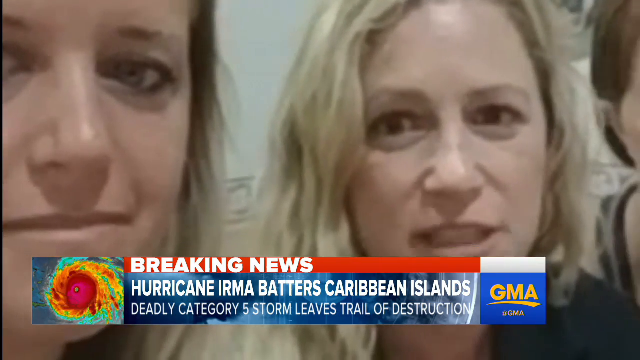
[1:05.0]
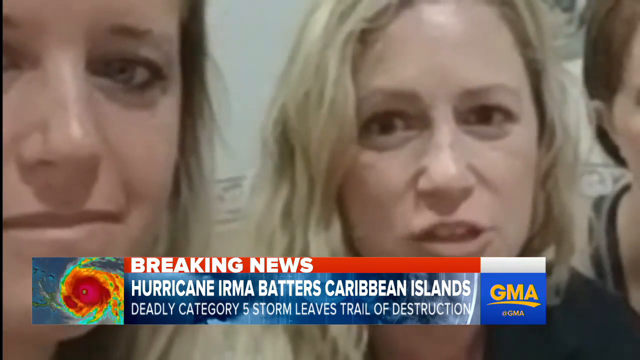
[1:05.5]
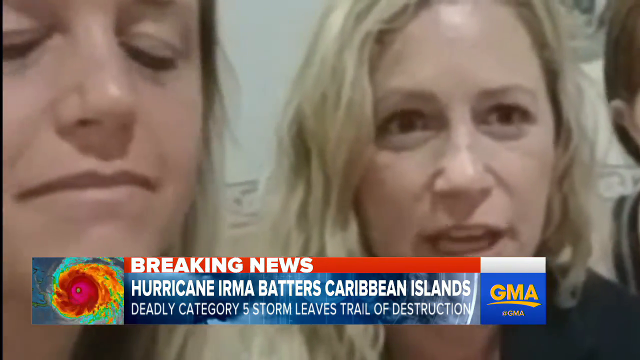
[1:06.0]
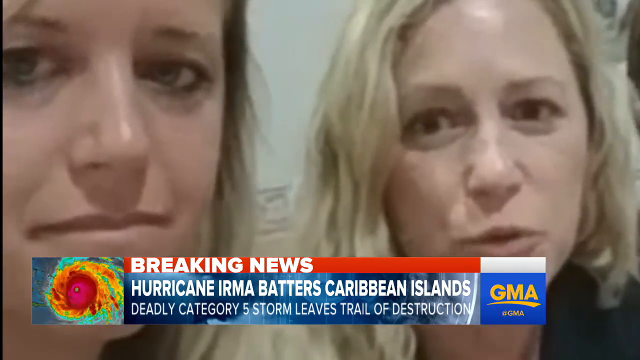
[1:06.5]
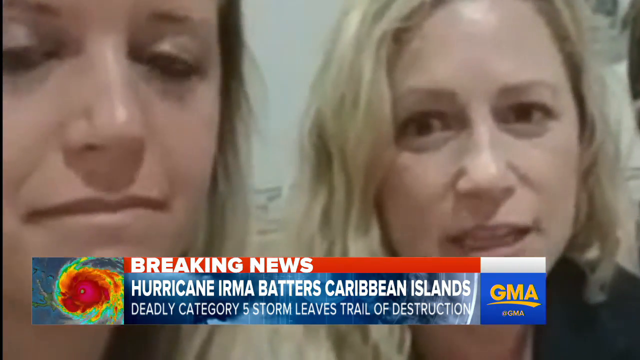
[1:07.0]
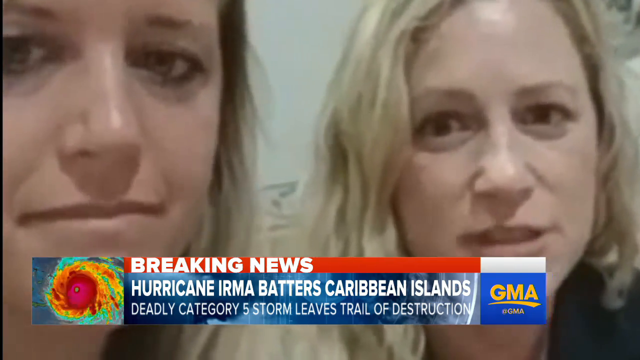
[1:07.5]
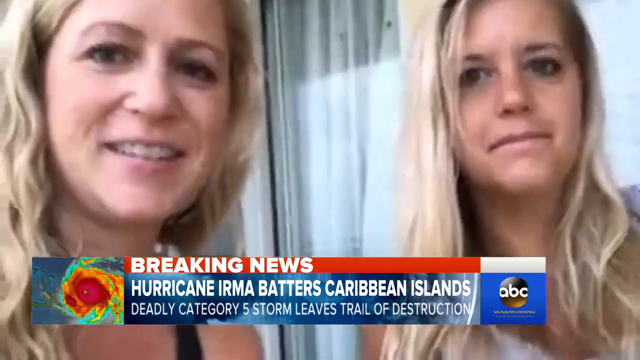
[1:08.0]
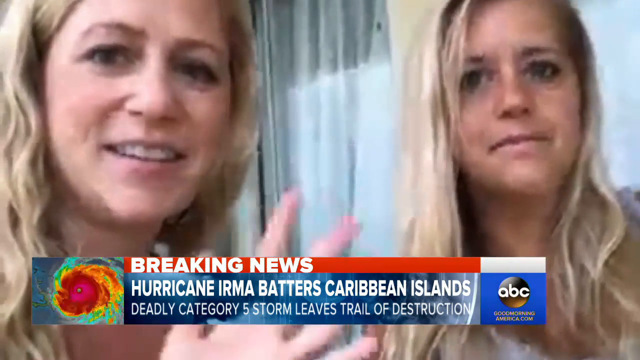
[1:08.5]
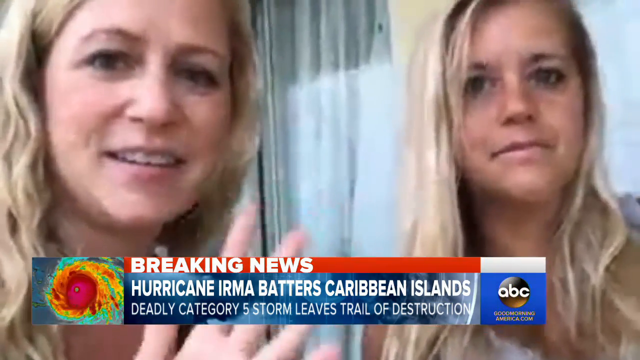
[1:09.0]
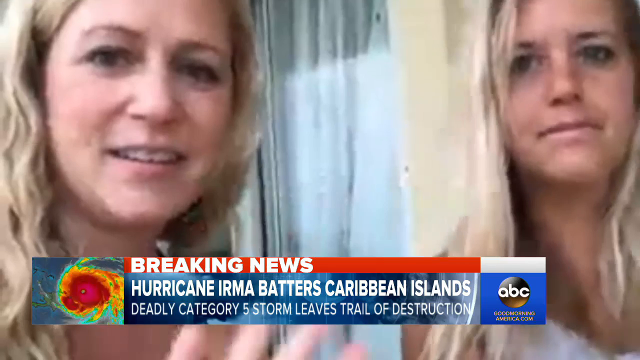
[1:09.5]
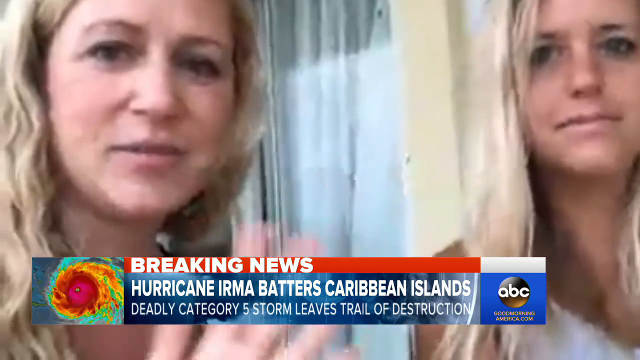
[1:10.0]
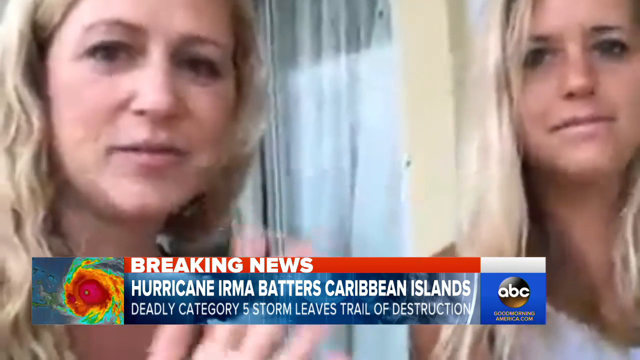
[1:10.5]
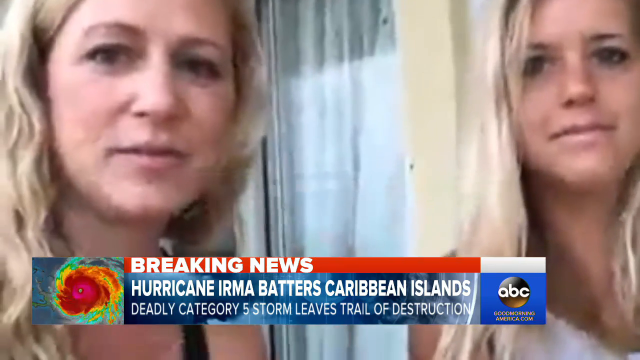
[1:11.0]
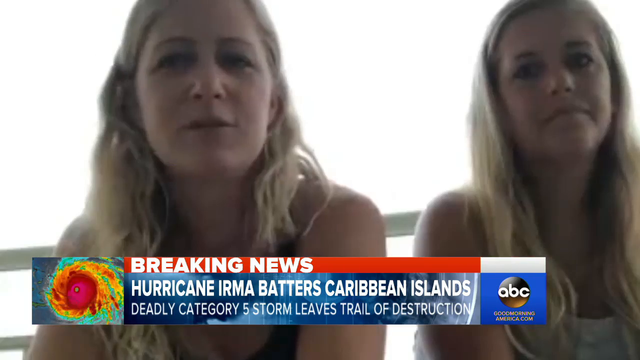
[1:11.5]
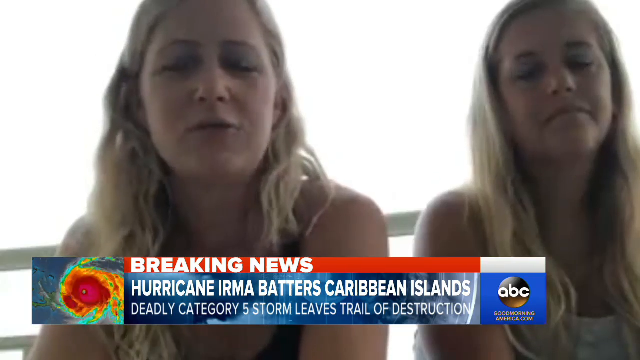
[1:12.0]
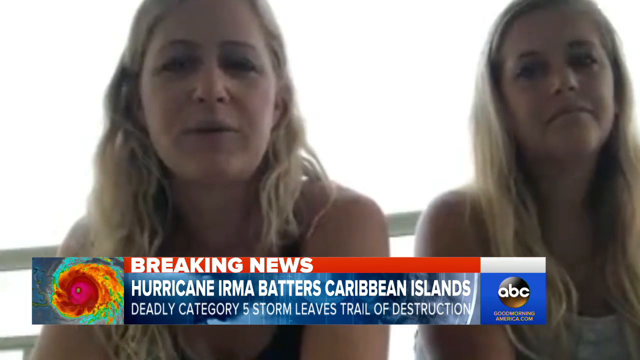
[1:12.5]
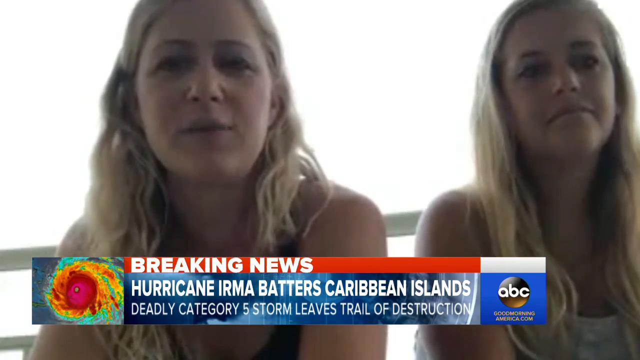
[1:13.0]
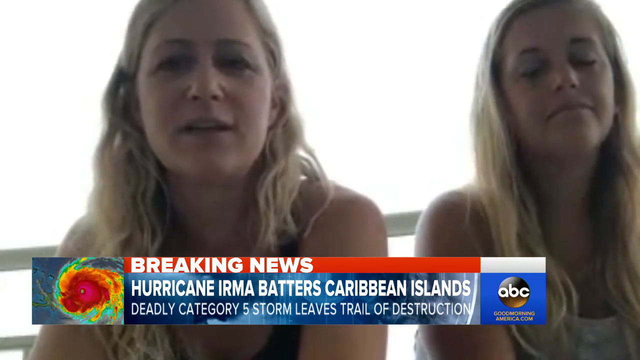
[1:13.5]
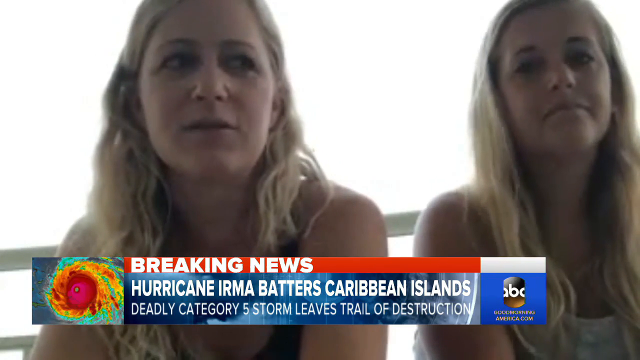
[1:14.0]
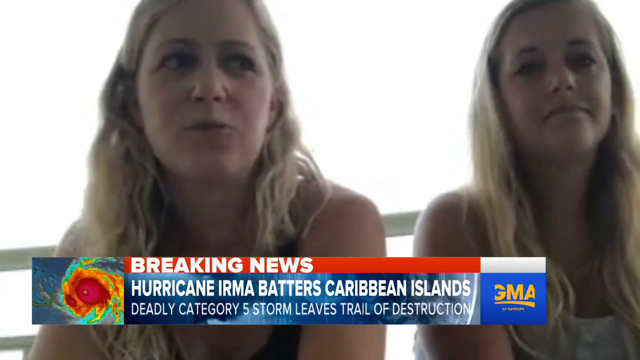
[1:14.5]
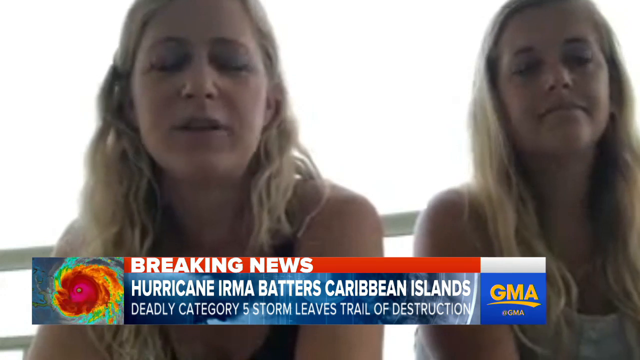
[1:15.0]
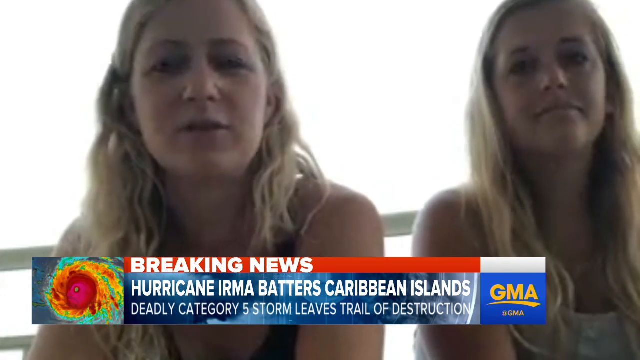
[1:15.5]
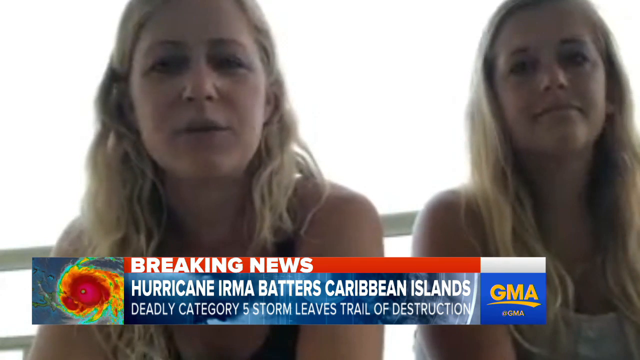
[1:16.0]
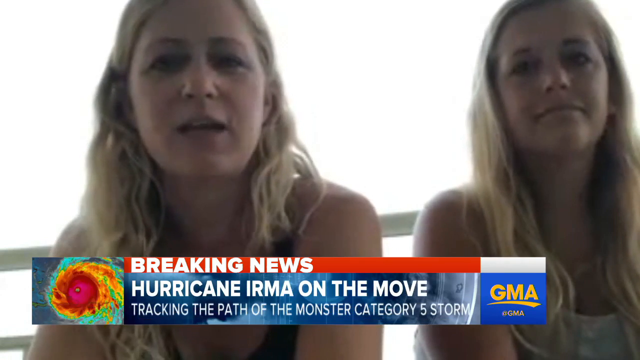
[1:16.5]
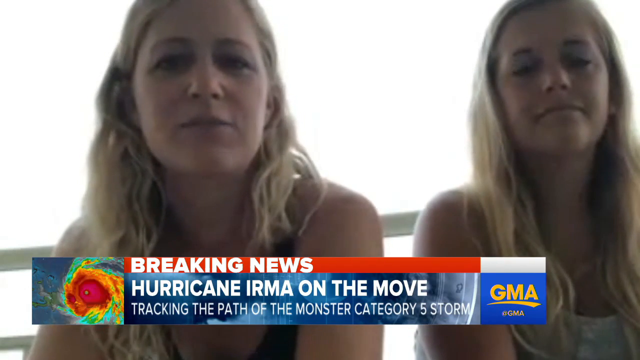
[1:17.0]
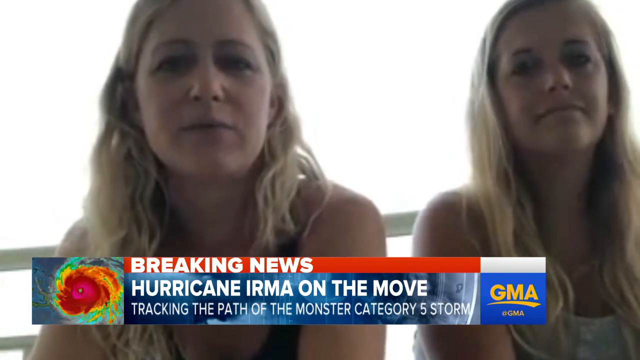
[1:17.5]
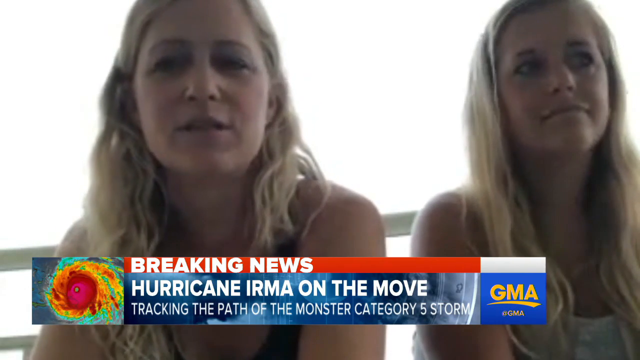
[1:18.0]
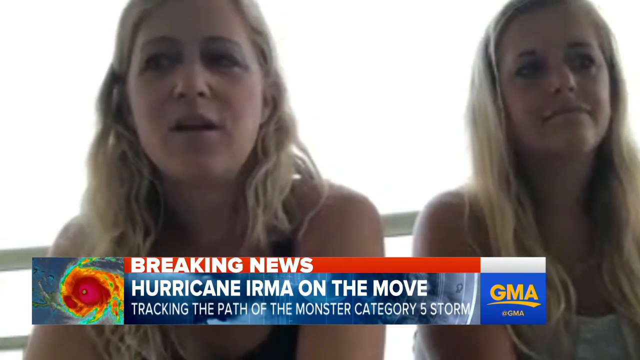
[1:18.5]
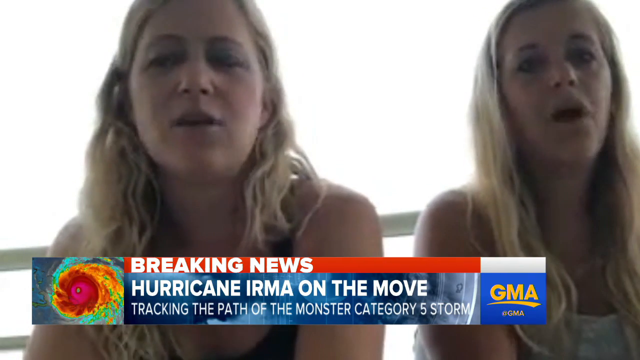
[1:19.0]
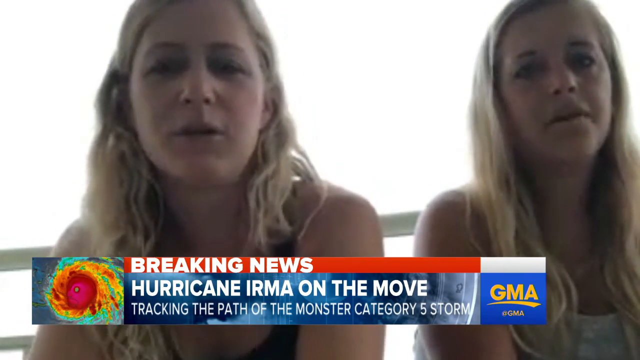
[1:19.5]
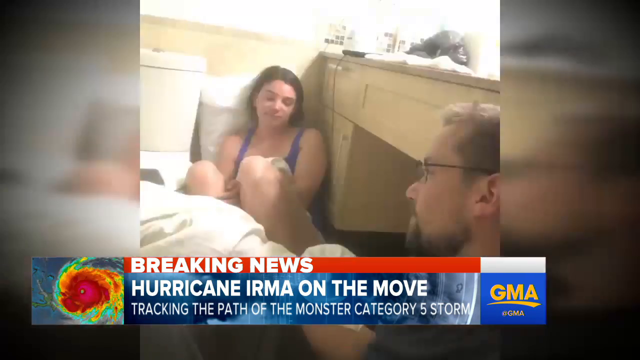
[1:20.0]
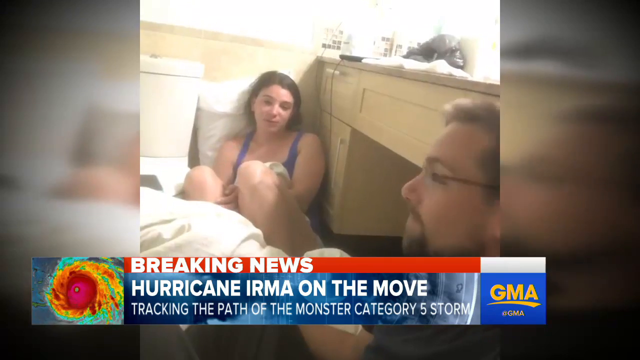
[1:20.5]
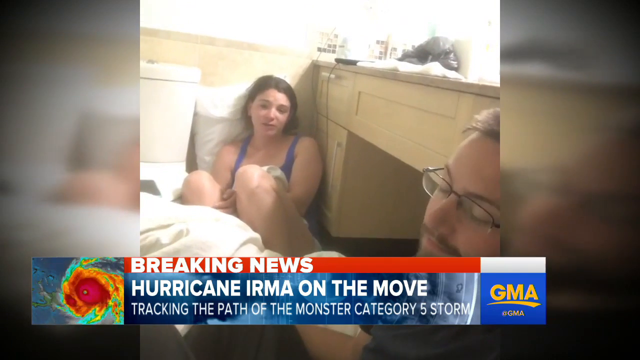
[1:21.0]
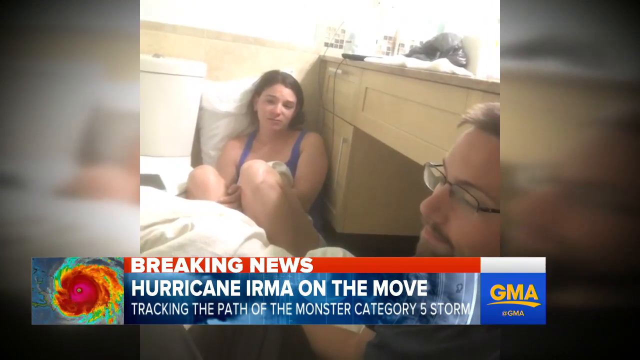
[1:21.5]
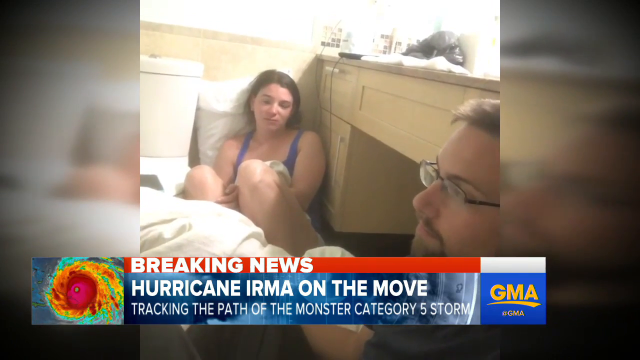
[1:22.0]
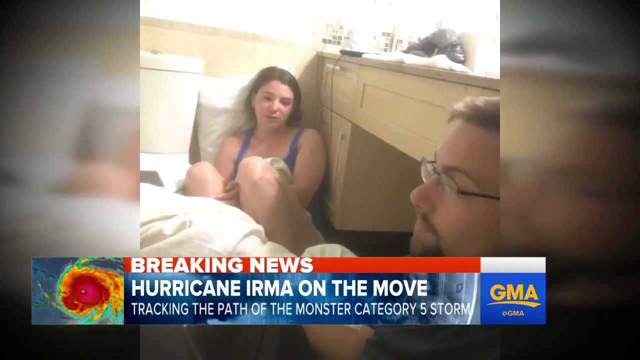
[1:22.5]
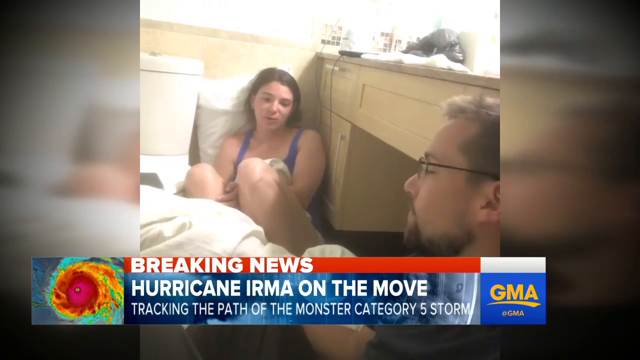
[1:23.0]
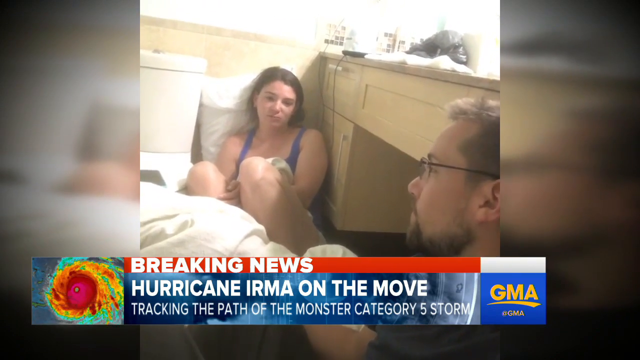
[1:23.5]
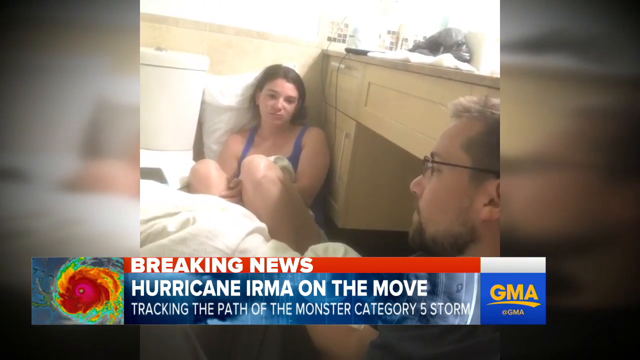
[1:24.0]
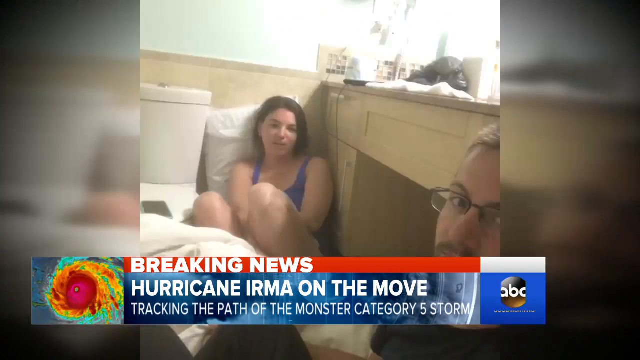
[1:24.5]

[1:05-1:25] A news clip about Hurricane Irma in the Caribbean islands shows a few people being interviewed during the storm. Two women with blonde hair, who appear to be tourists, look like they are sort of enjoying being filmed for the news; one waves and the other is sort of half smiling and doesn't seem too bothered. In the background the sky has a sort of grayish cast. Another interview shows what looks like two other tourists who look like they are sitting on their bathroom floor, with a table above them, close to what may be a toilet. The woman appears to have brown hair and wears what looks like a purplish tank top and shorts, her legs showing, with her hands sandwiched between her knees. The man also appears to have brown hair and wears glasses; he sits looking up, speaking to the interviewer. The two women and the couple all appear to be in their late 20s or early 30s.